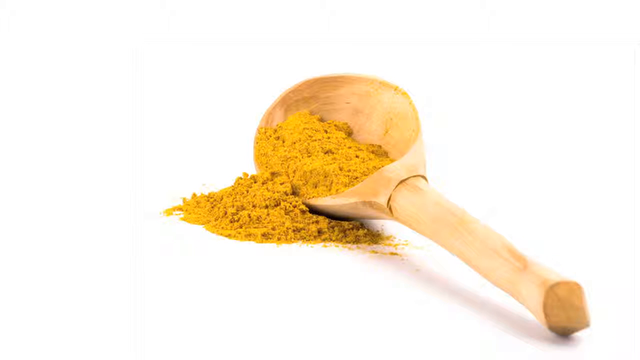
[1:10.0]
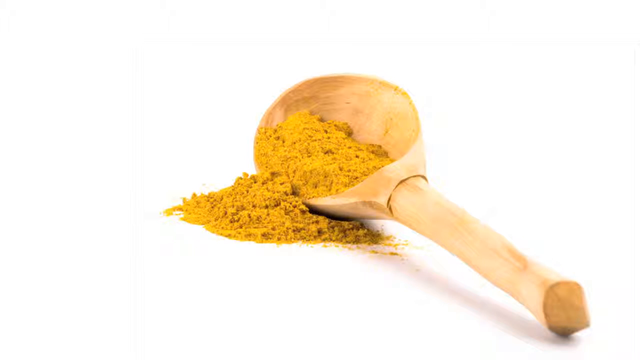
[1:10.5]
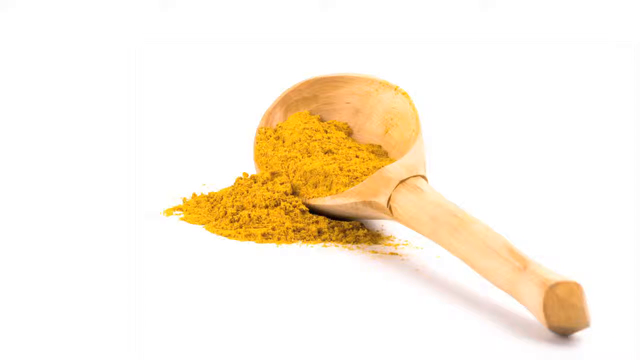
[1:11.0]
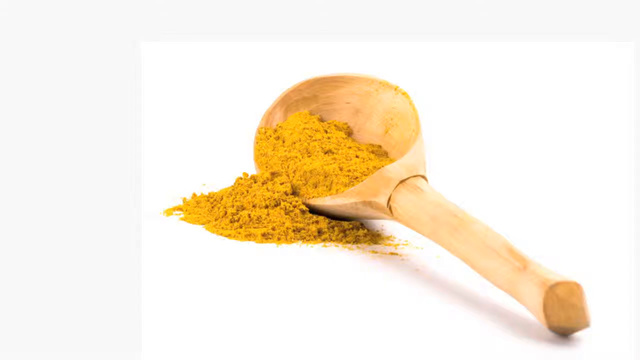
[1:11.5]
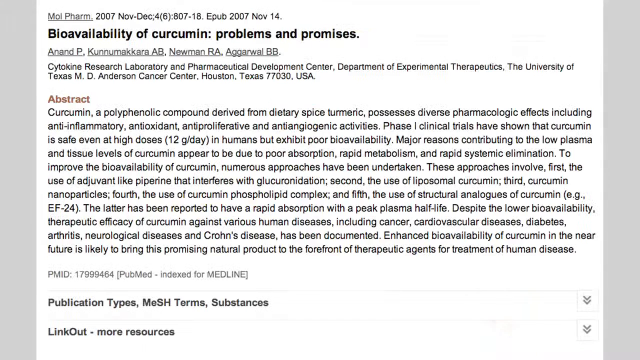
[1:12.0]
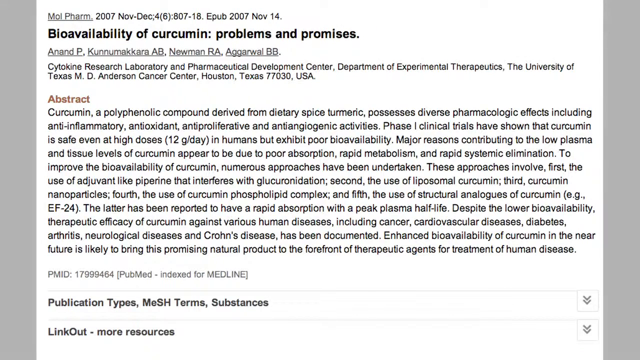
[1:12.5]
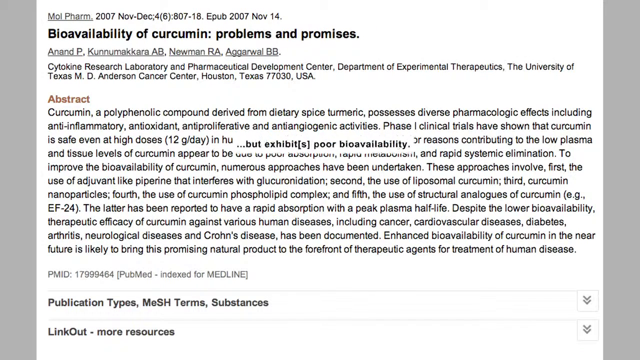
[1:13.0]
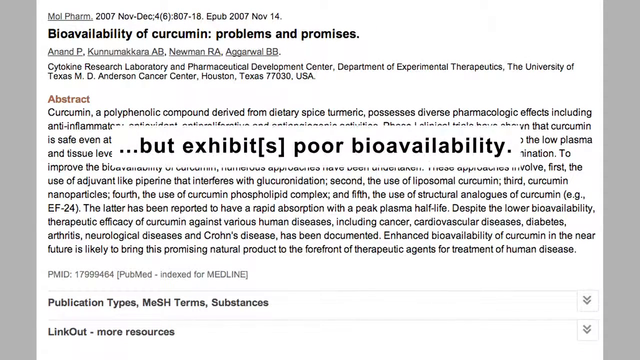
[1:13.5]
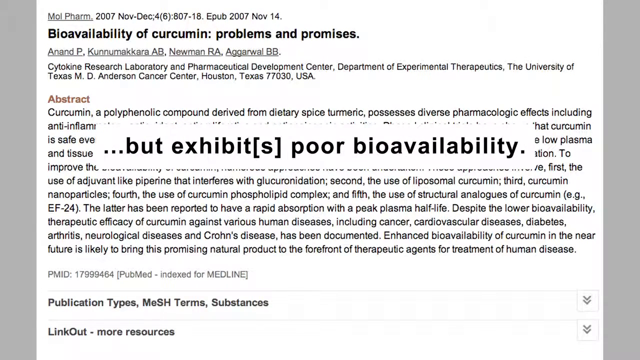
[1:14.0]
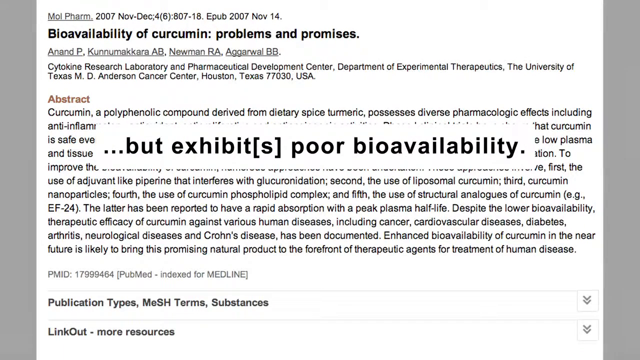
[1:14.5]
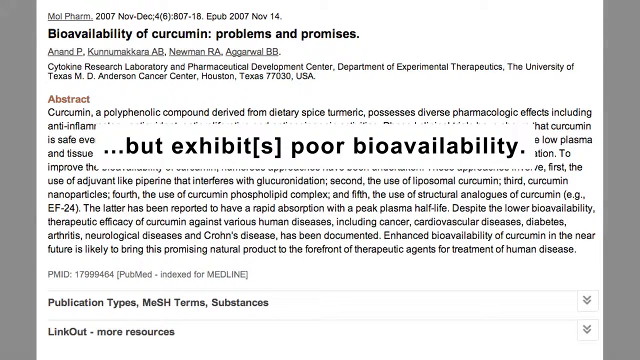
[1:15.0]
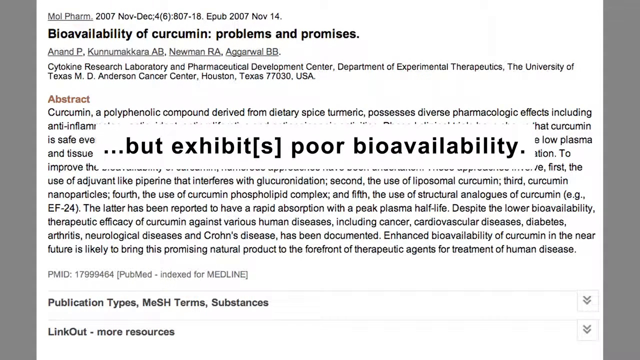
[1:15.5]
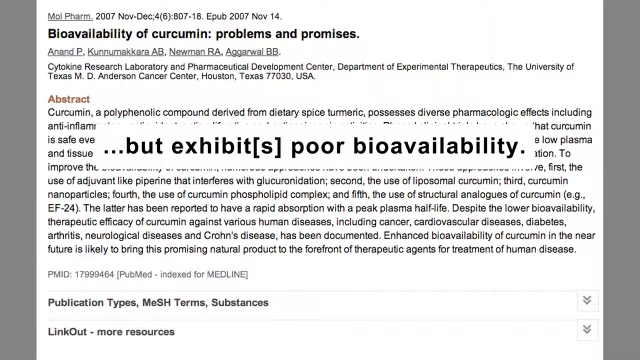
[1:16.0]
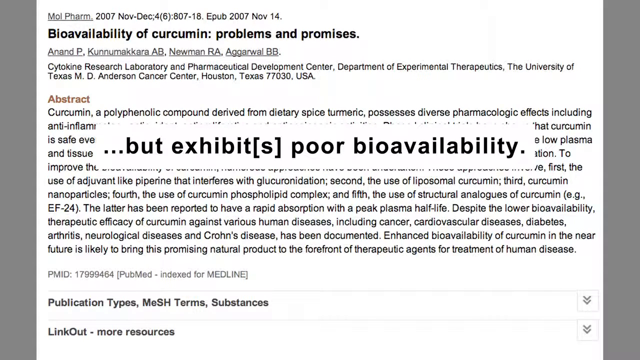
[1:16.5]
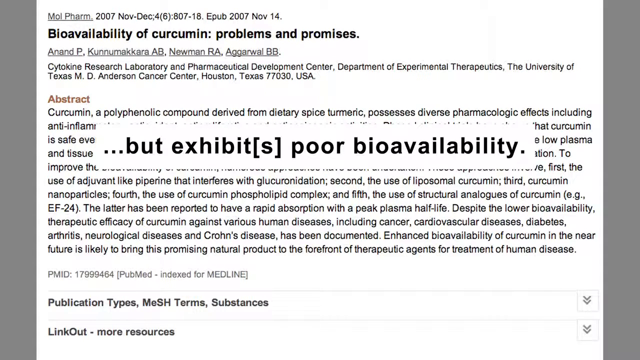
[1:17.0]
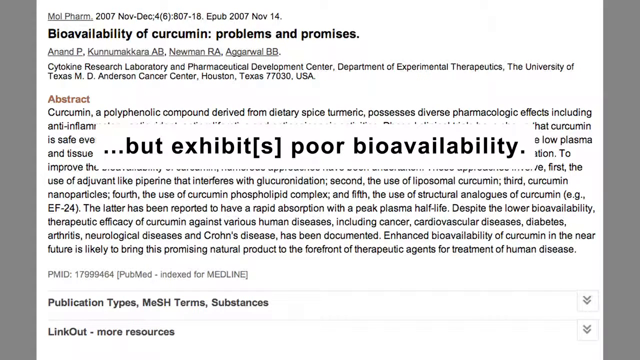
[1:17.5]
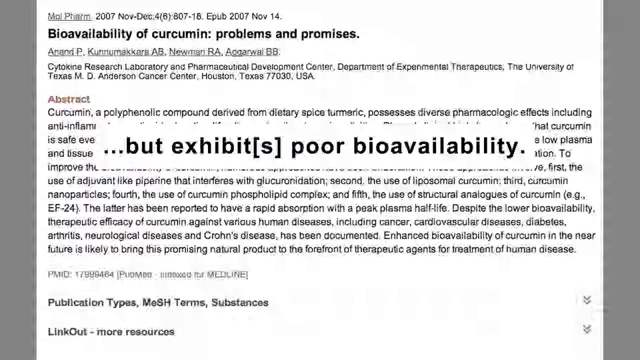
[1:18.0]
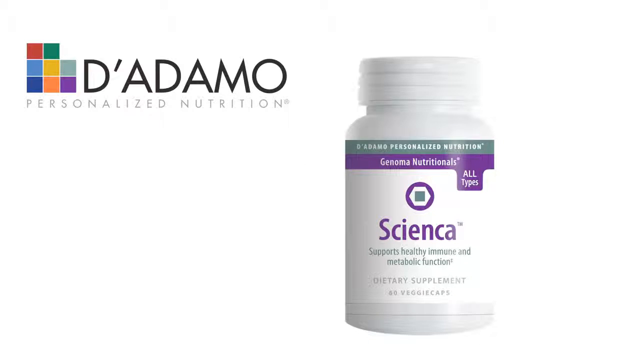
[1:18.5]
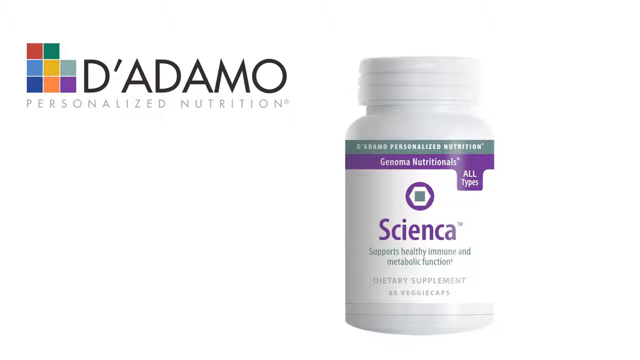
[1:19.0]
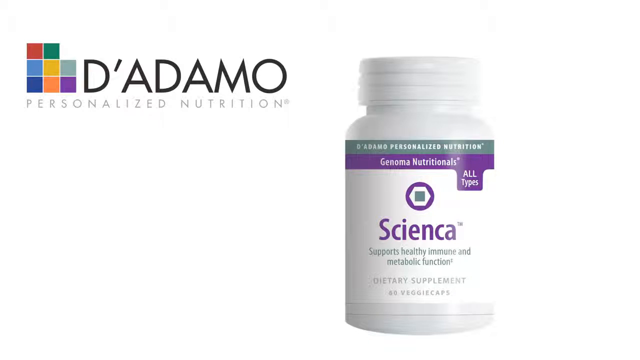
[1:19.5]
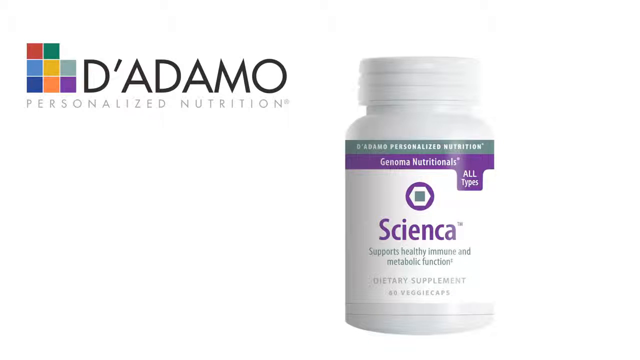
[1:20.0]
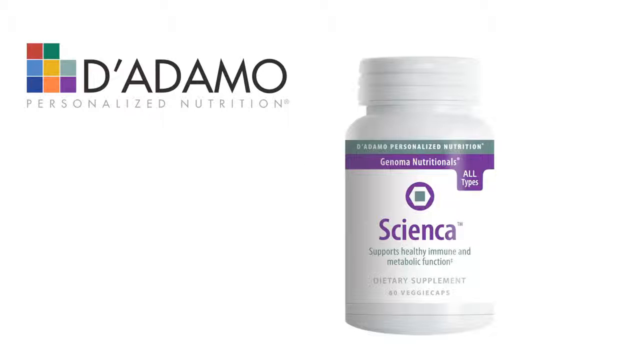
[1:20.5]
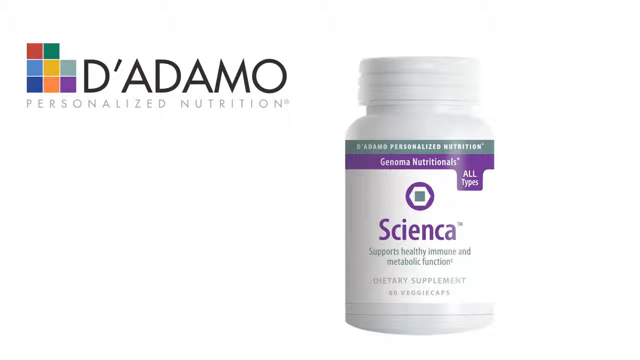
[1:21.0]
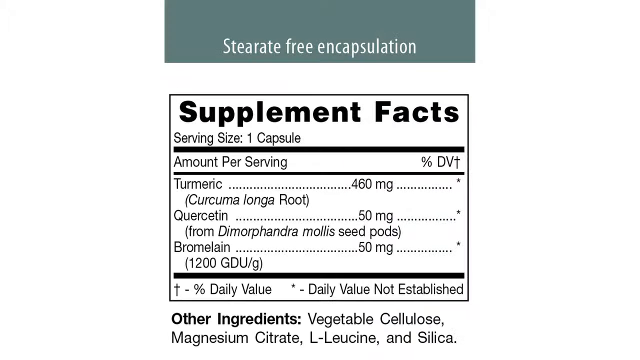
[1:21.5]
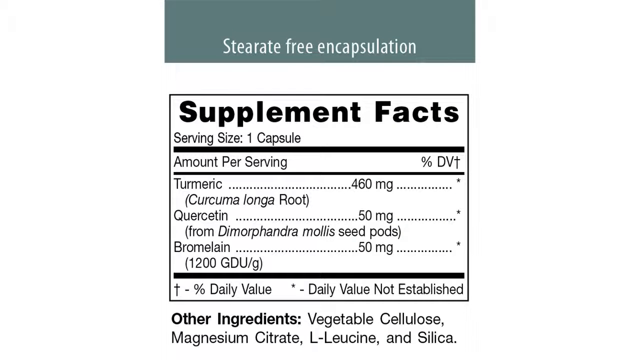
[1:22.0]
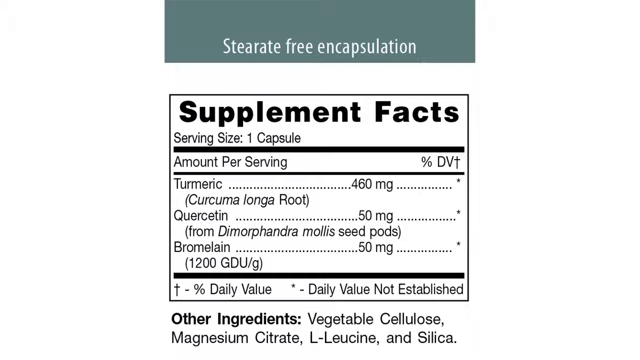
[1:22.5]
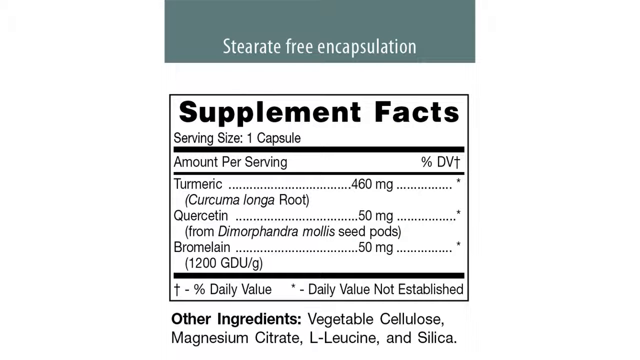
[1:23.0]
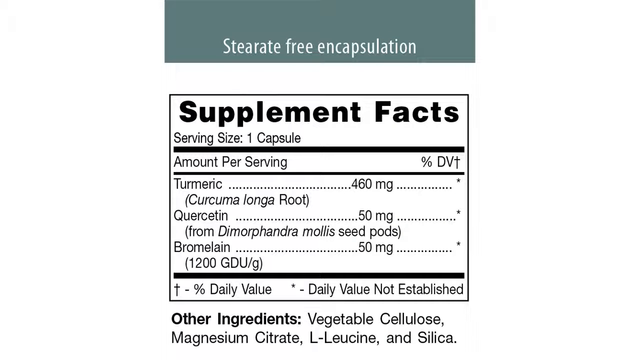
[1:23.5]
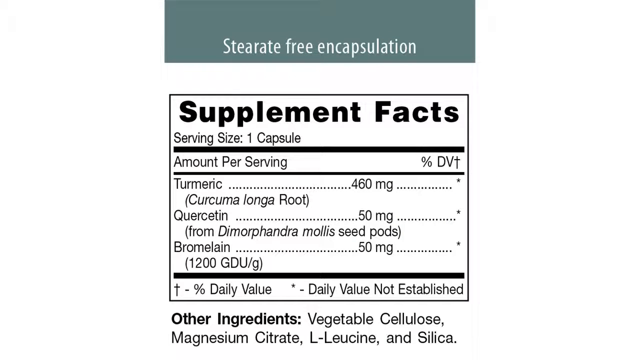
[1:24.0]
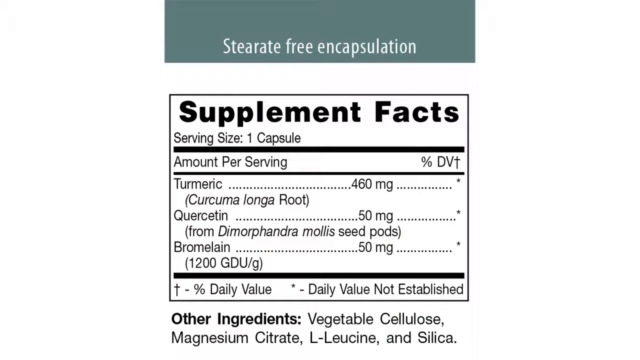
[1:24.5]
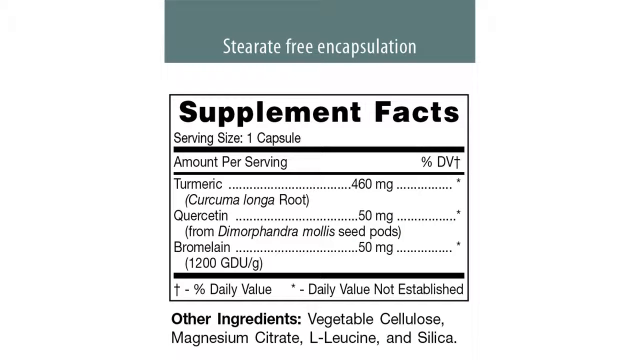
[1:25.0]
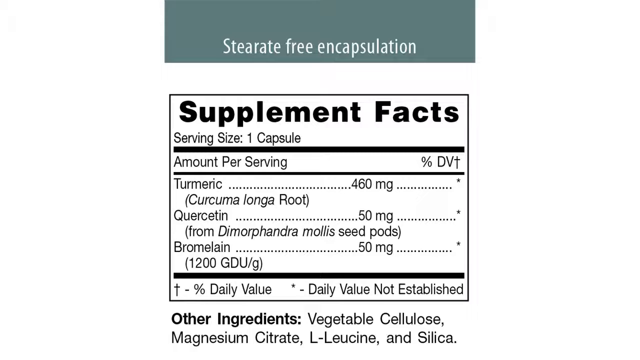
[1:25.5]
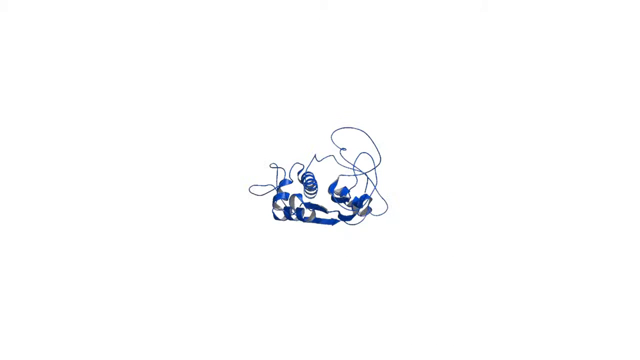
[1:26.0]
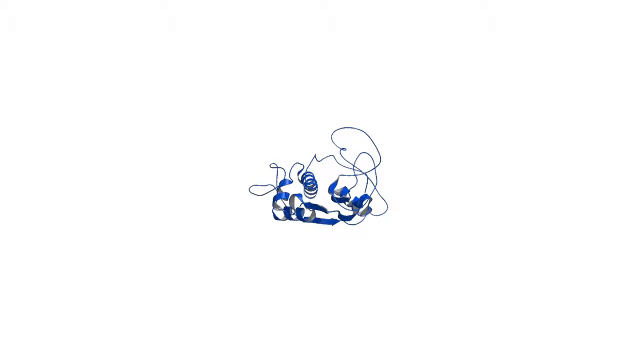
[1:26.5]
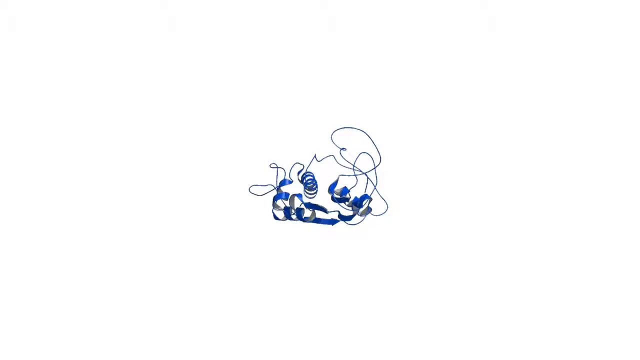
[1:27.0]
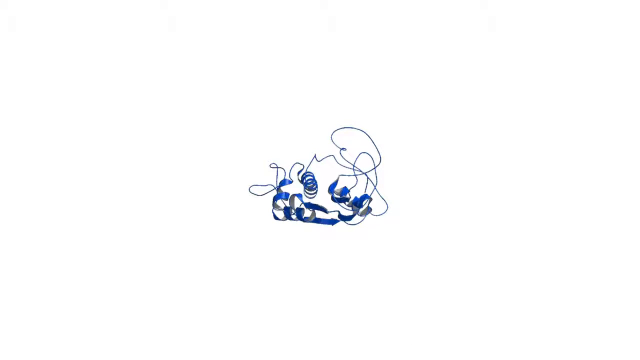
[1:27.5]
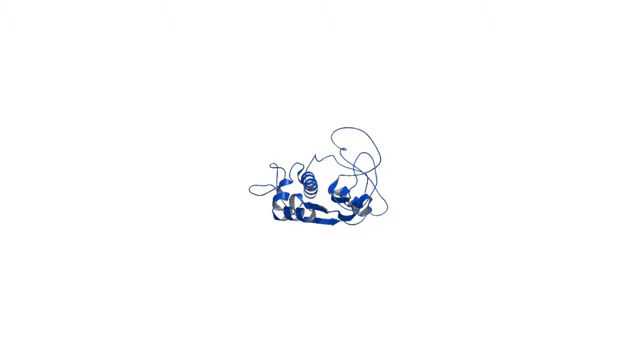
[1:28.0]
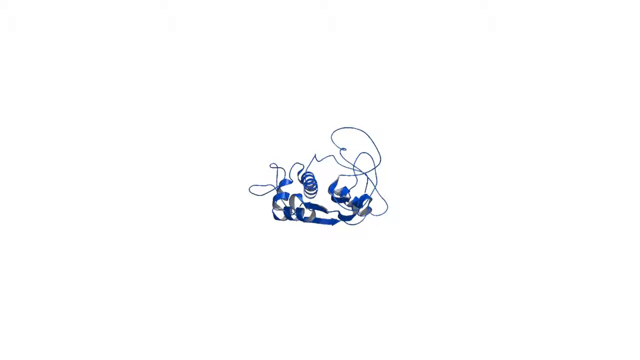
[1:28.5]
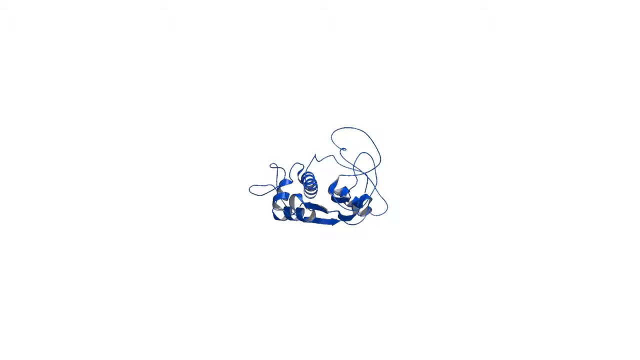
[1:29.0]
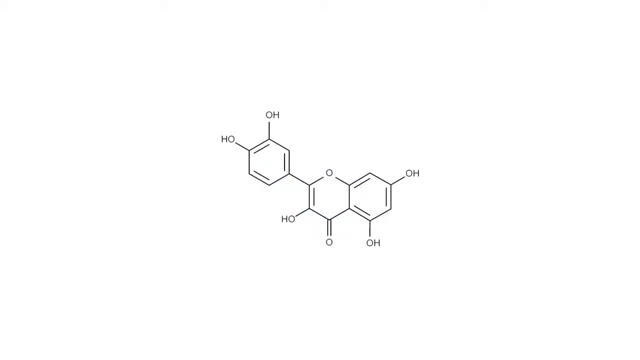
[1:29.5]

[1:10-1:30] A wooden spoon contains turmeric powder. The scene changes to text shown as an A4 page with black text, titled "bioavailability of curcumin problems and promises." It seems to be a paper written by the Cytokine Research Lab and Pharmaceutical Development Center at the Department of Experimental Therapeutics, the University of Texas in Houston, with various information regarding the efficacy of turmeric powder. Highlighted excerpts from the paper are then shown, including "but exhibits poor bioavailability" in bold. Next, a screen shows the name "D'Adamo" with "personalized nutrition" underneath. On the left is the logo, made of small colored squares in the shape of a block on a white background. On the right is a white medicine bottle whose sticker has purple and grey text reading "Scienza, supports health immune and metabolic function" and "dietary supplement with 60 veggie caps." The label on the back of the bottle is then shown, presumably giving the supplement facts for one capsule: the amount per serving of turmeric in grams, bromelain, and the daily value as not established, along with other ingredients including vegetable cellulose, magnesium, citrate, L-Leucine and silica.